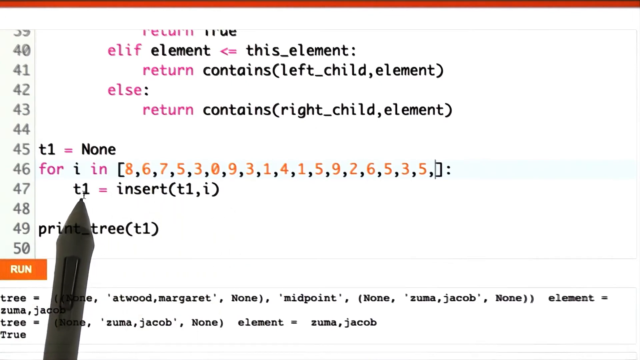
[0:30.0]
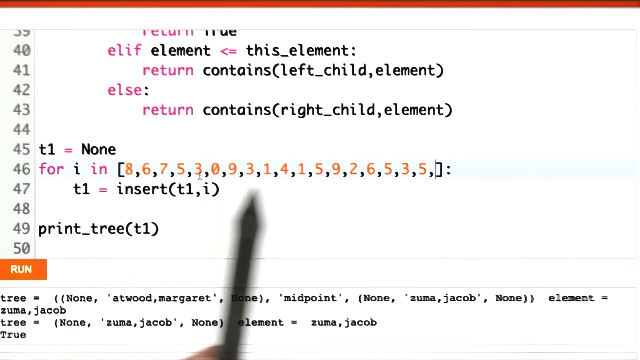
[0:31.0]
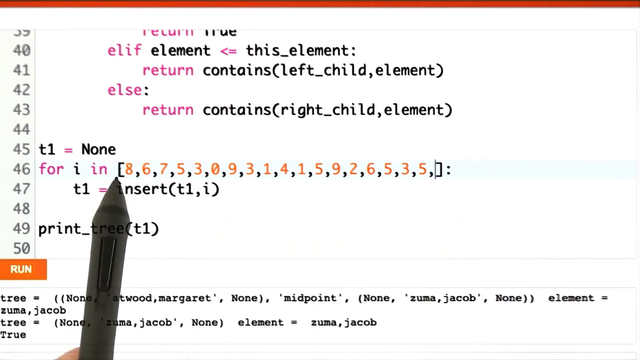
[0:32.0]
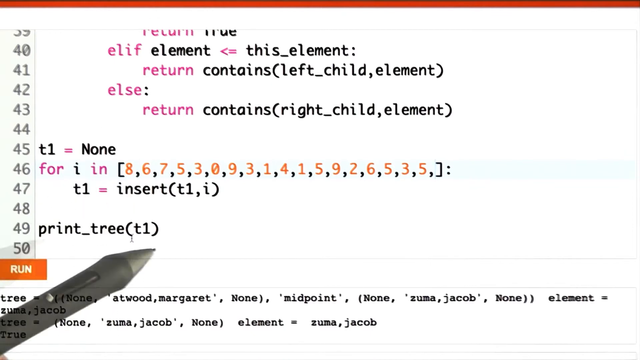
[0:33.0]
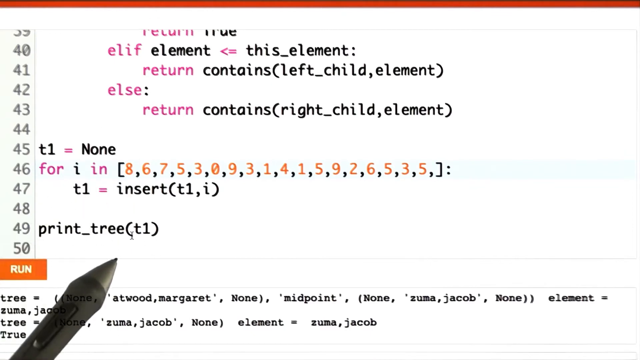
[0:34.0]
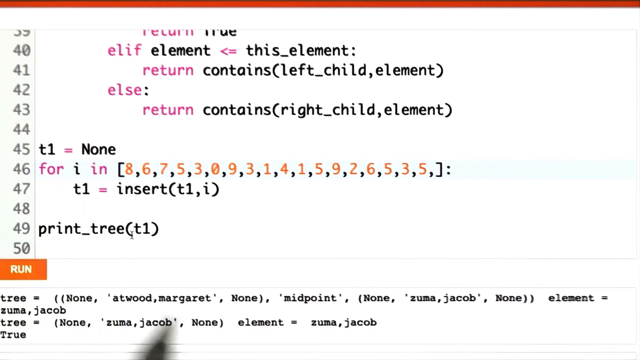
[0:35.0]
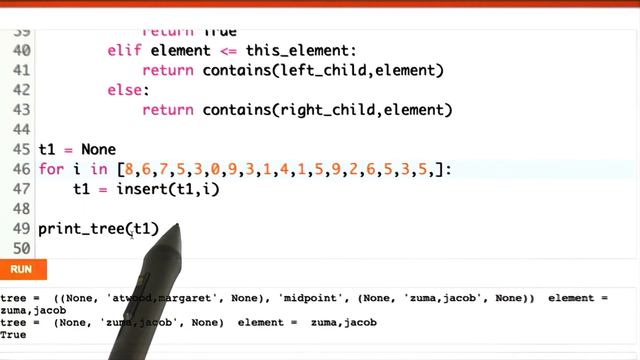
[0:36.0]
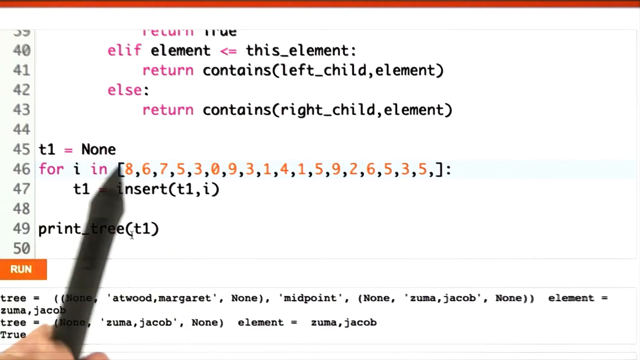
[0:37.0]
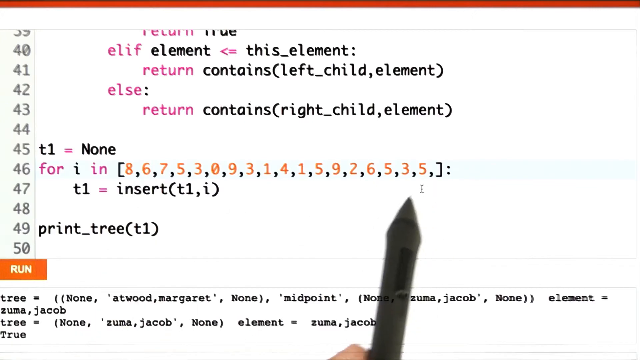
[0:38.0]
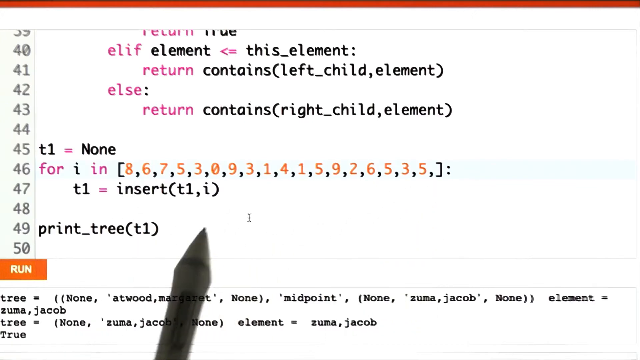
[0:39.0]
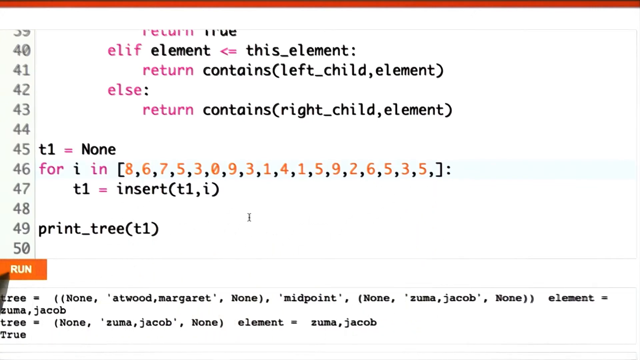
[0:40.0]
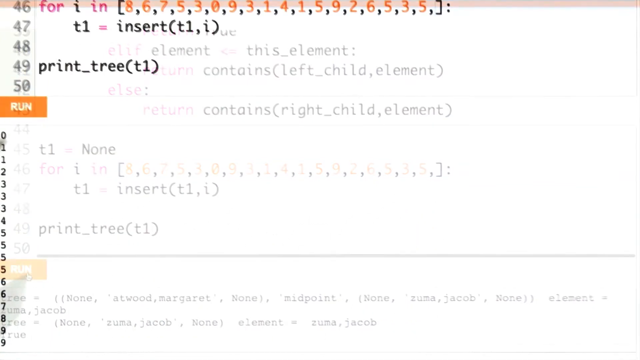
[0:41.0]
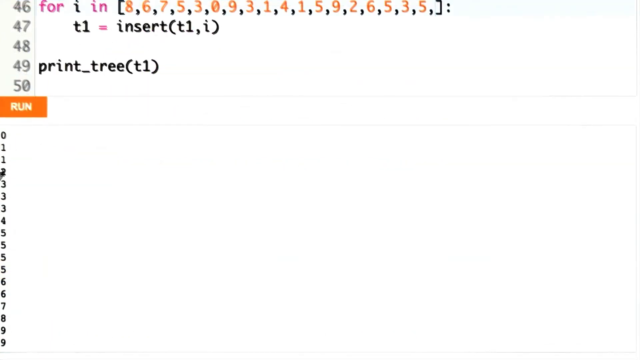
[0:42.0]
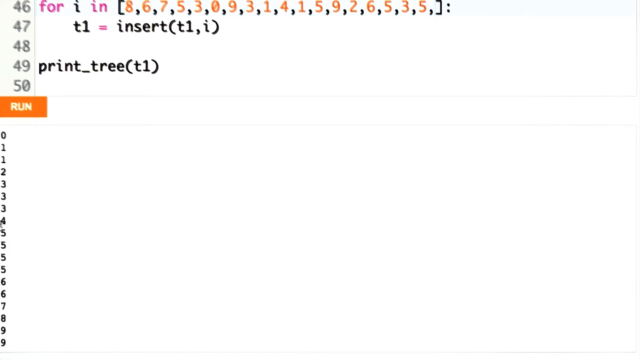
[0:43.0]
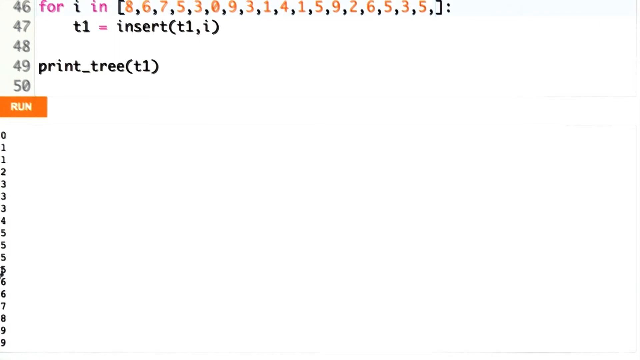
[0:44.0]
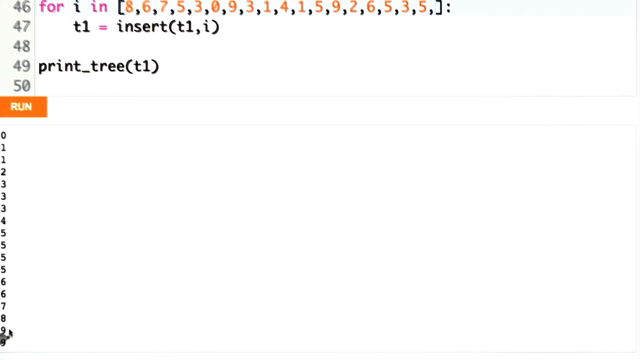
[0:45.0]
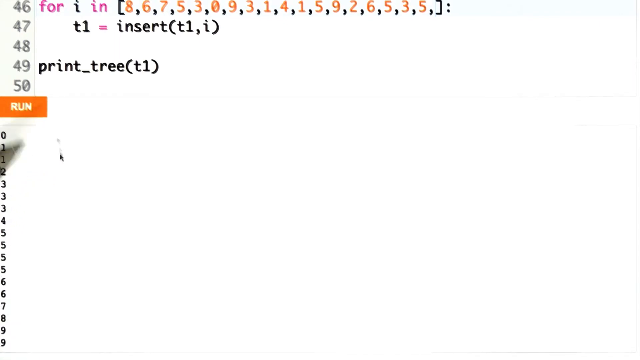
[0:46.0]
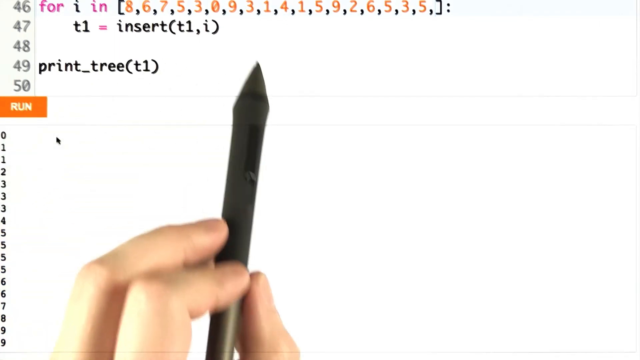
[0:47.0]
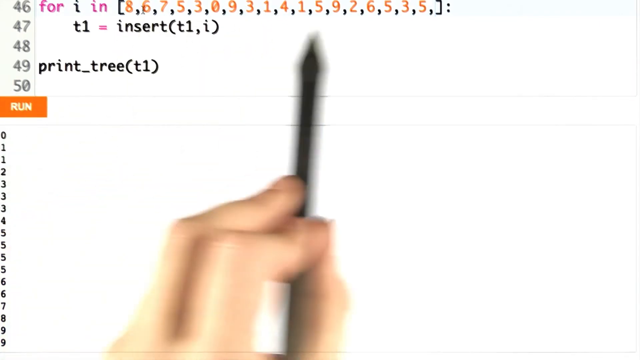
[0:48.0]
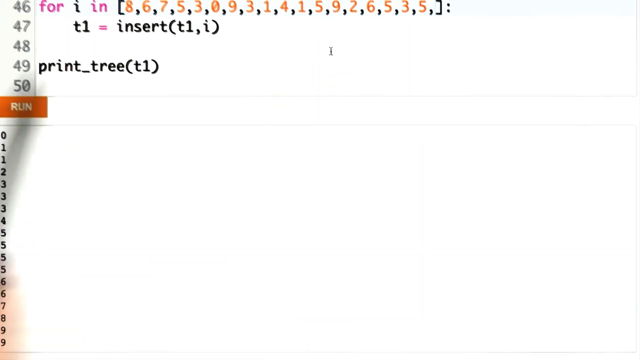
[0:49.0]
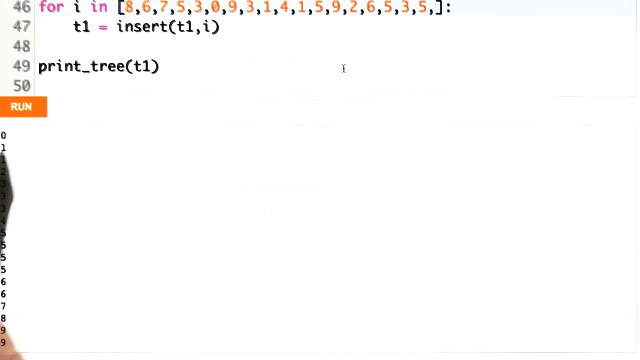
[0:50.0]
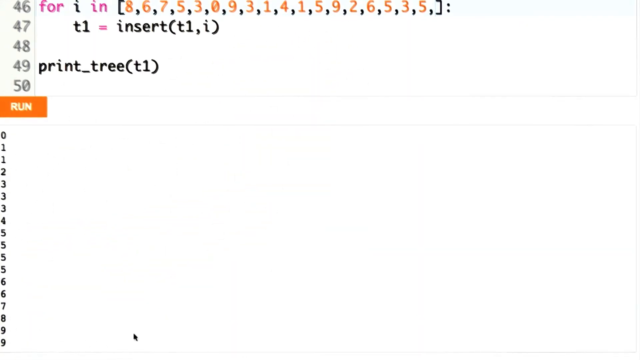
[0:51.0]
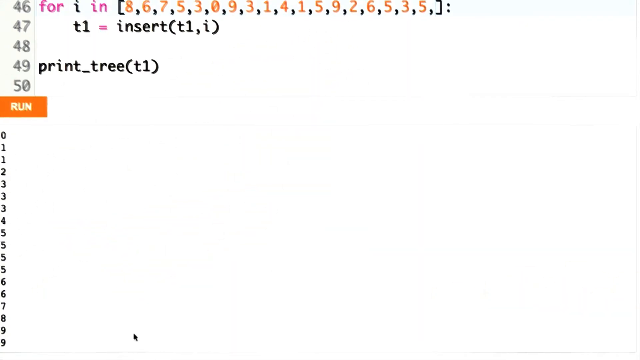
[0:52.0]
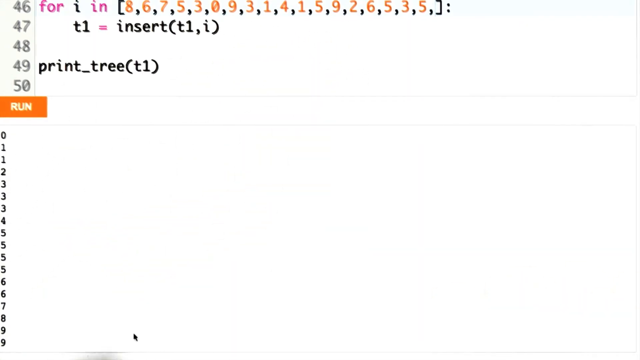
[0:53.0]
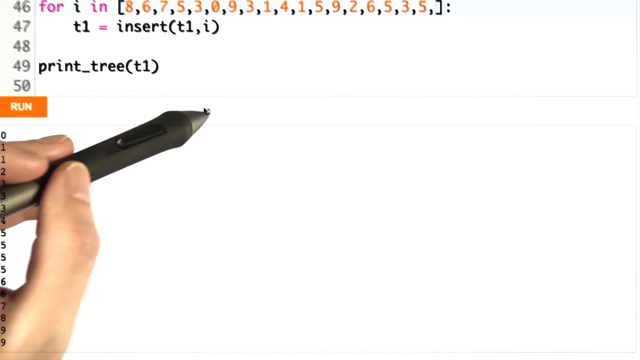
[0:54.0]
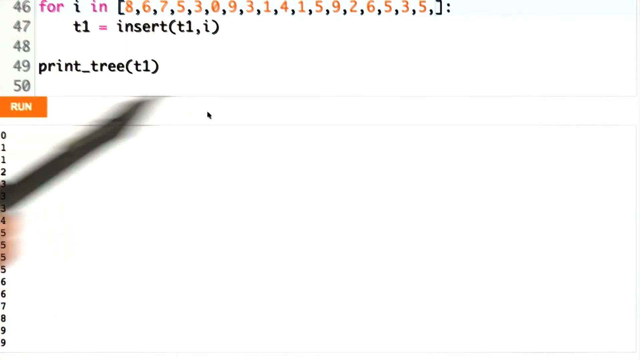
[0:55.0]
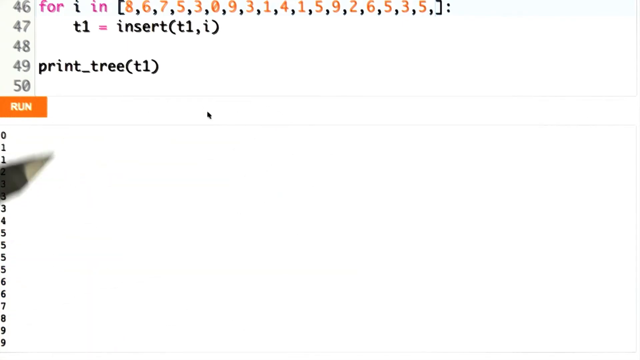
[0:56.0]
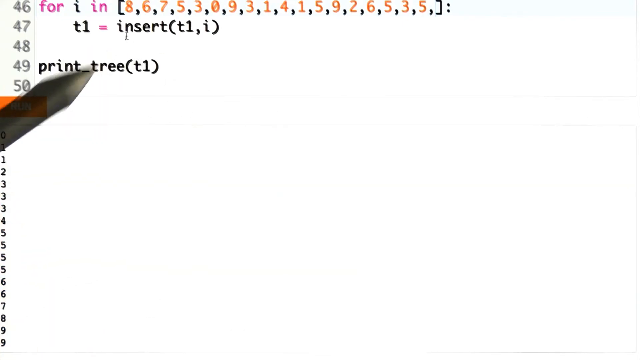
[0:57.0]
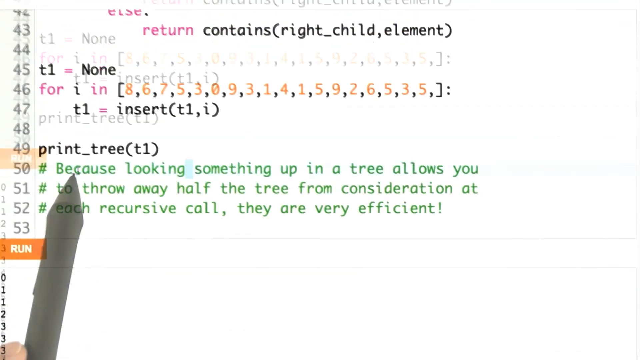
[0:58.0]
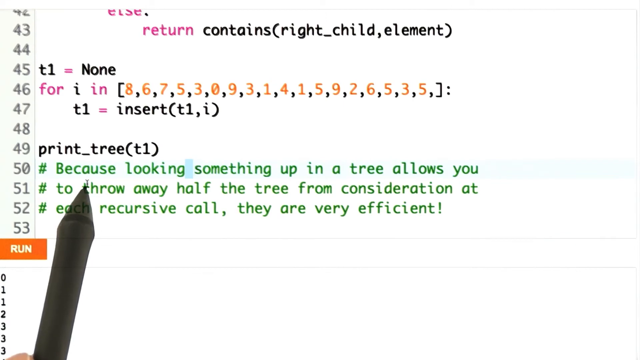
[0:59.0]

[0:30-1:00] A left hand holds a black pen and uses it to explain a block of programming source code. There is a for loop and a structure variable T assigned to none. In the for loop, T1 is assigned all the numbers, and T1 is then fed to the print tree function, which seems to be meant to make a tree shape. The program runs and shows the results at the bottom, starting with a small number and going down to the bigger numbers. A message in green then appears on the screen, and the black pen moves along it as if explaining it; the message states that, based on the tree algorithm, half the data is filtered out each time.